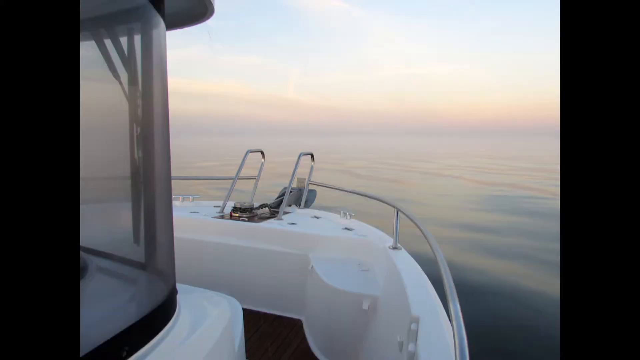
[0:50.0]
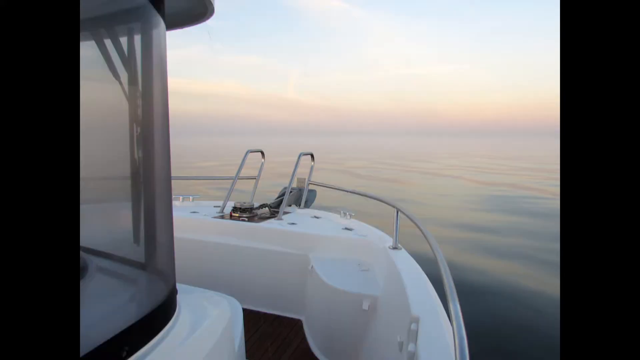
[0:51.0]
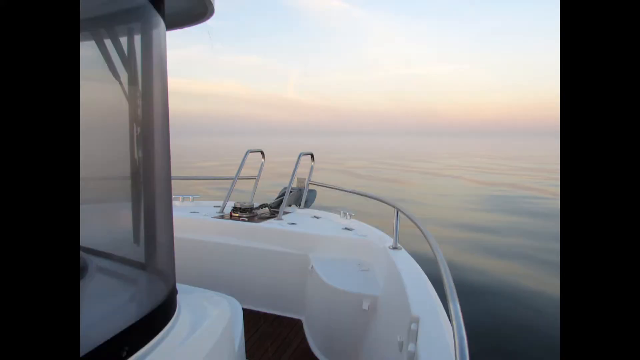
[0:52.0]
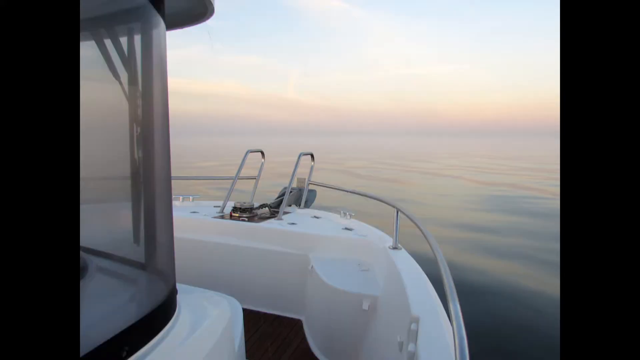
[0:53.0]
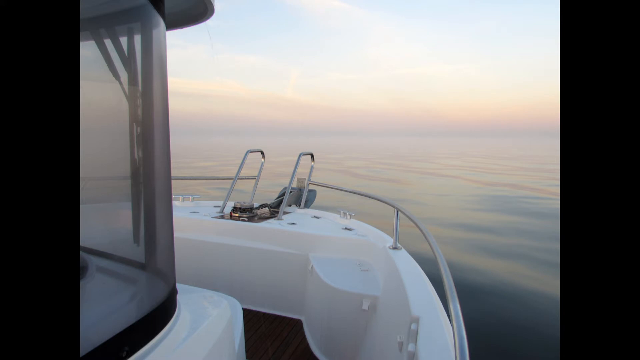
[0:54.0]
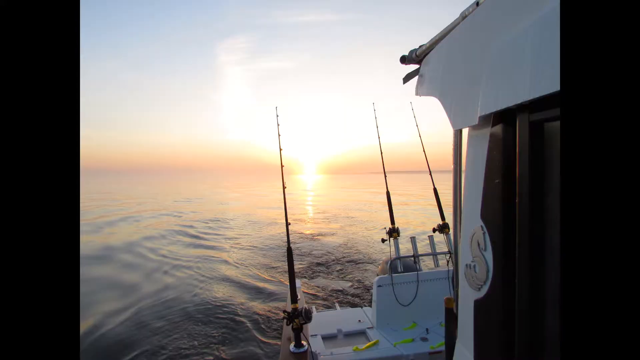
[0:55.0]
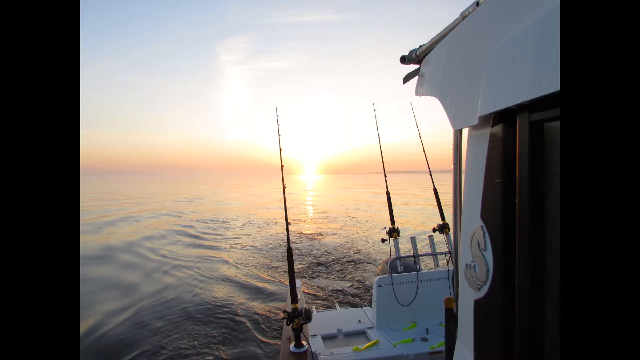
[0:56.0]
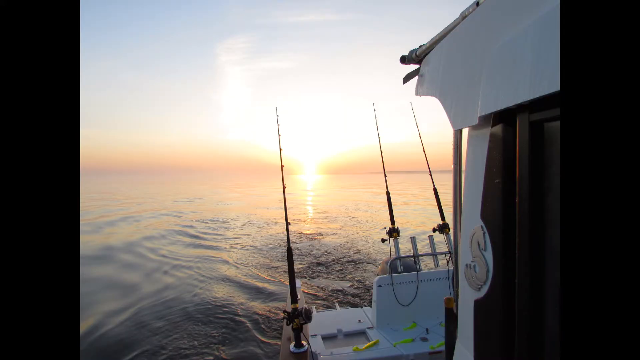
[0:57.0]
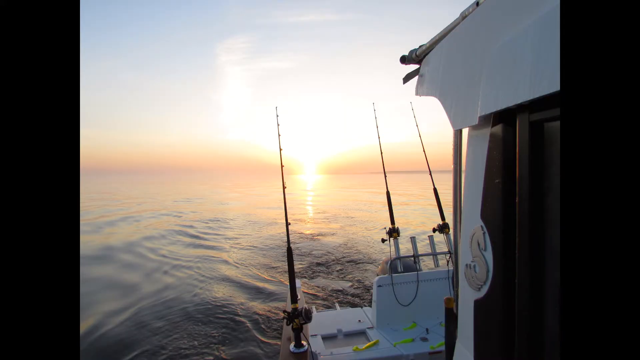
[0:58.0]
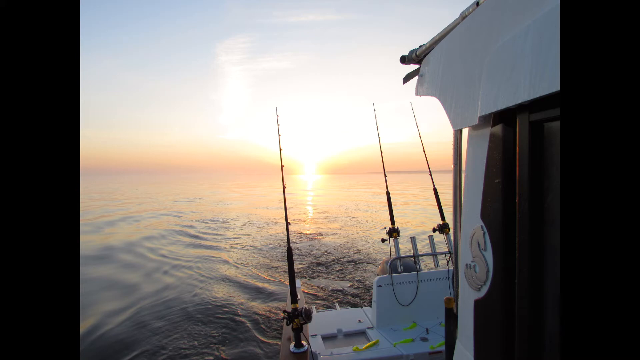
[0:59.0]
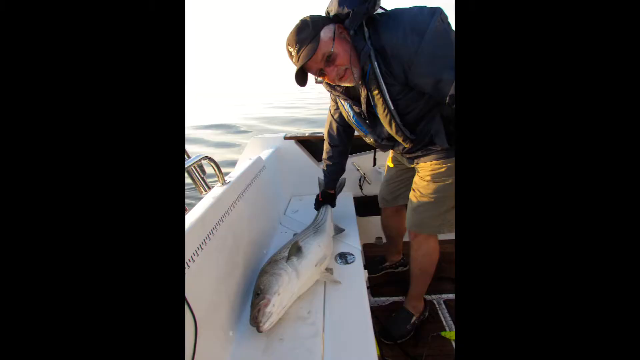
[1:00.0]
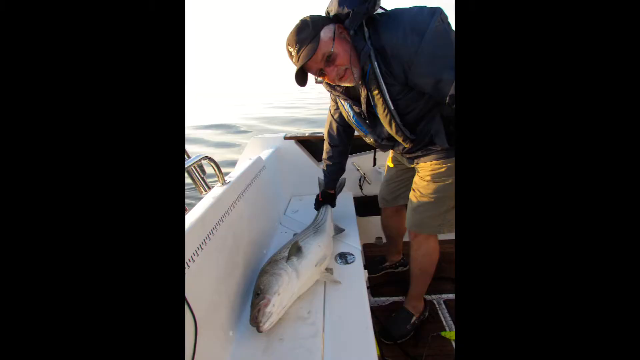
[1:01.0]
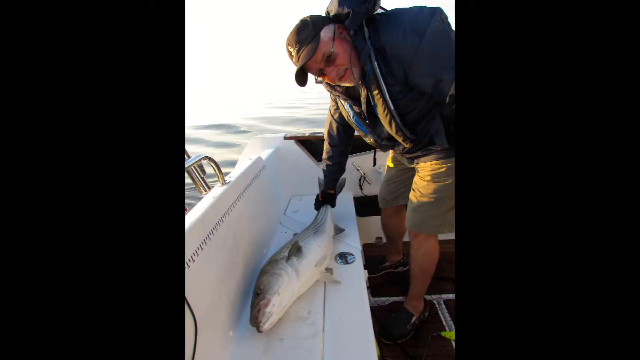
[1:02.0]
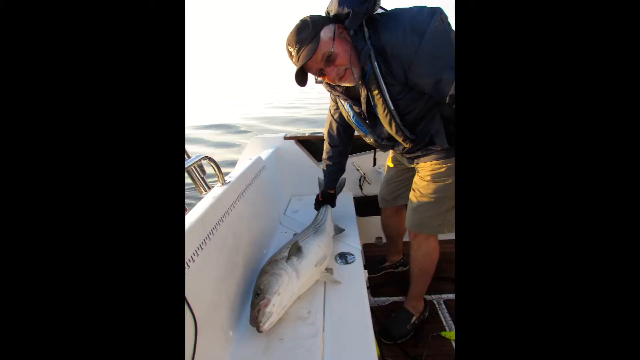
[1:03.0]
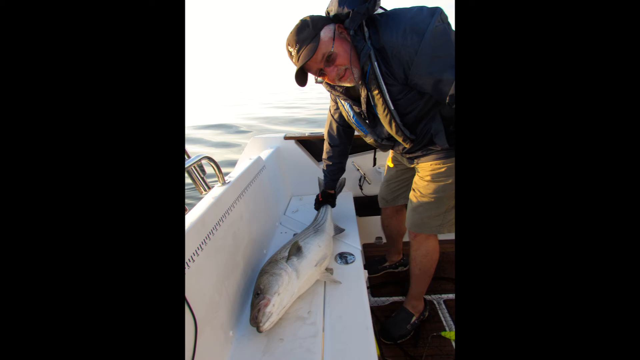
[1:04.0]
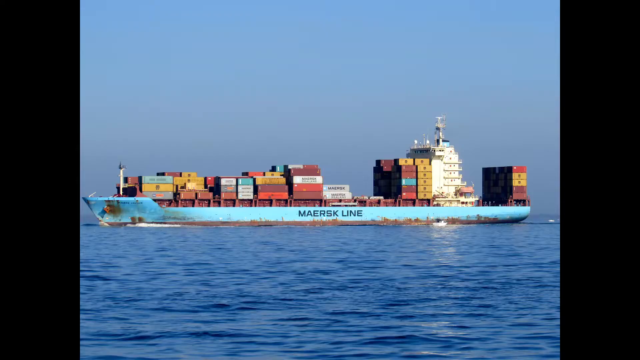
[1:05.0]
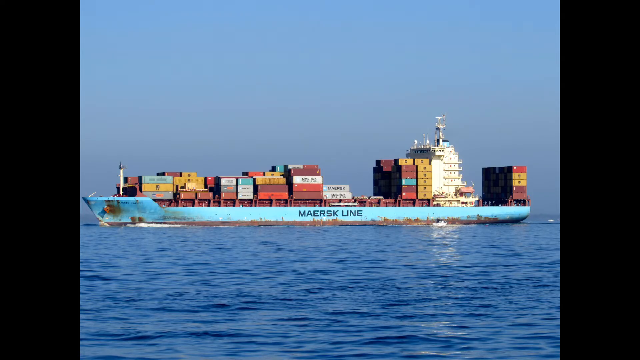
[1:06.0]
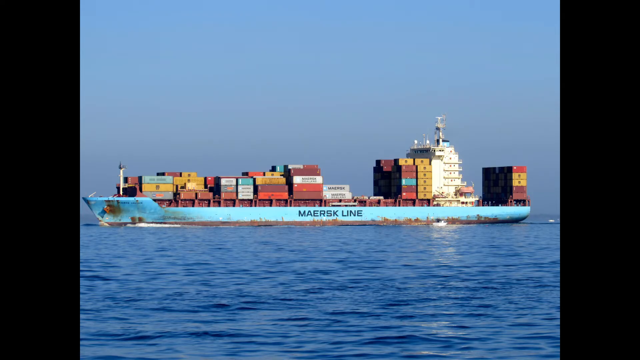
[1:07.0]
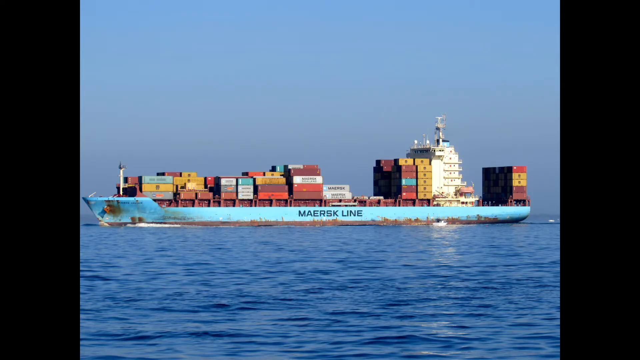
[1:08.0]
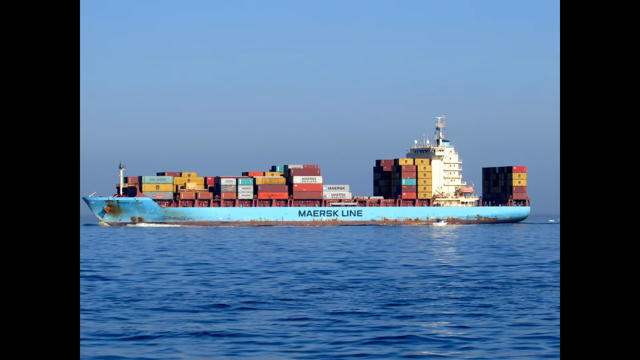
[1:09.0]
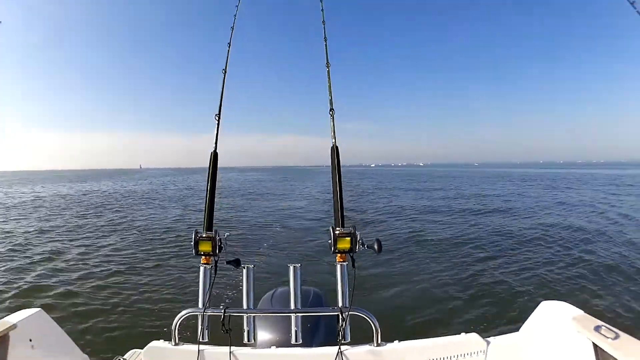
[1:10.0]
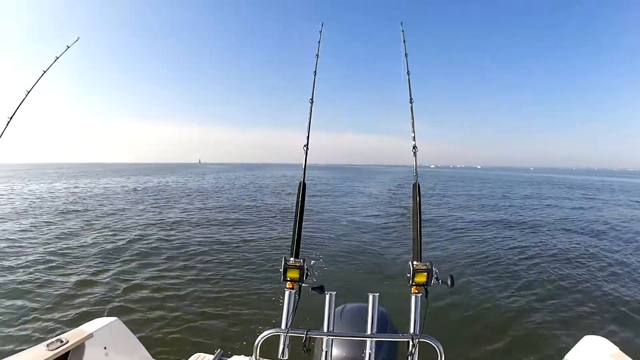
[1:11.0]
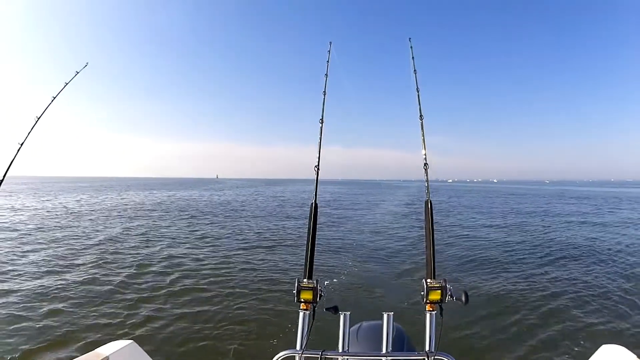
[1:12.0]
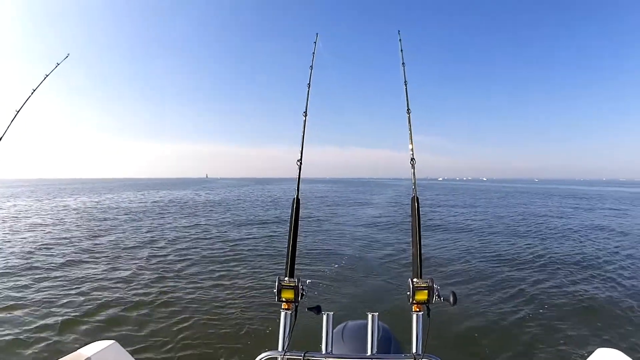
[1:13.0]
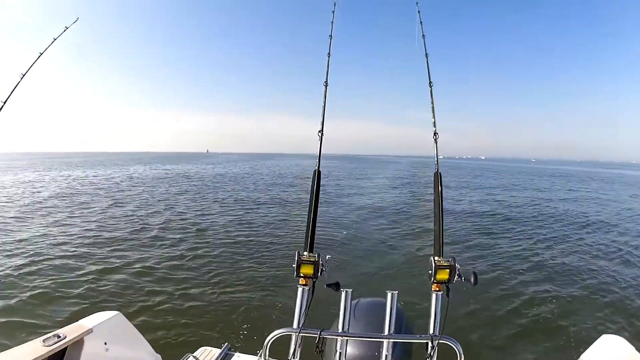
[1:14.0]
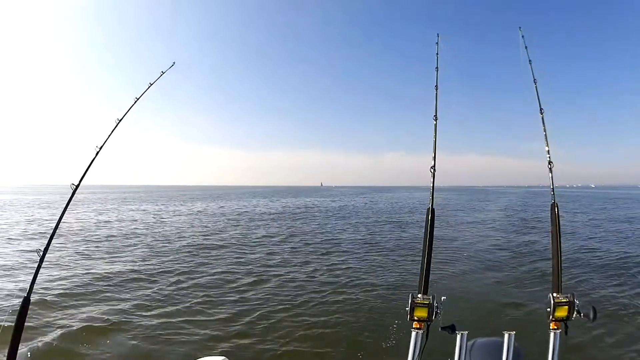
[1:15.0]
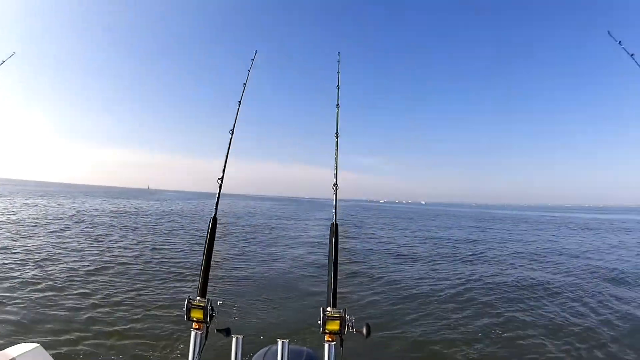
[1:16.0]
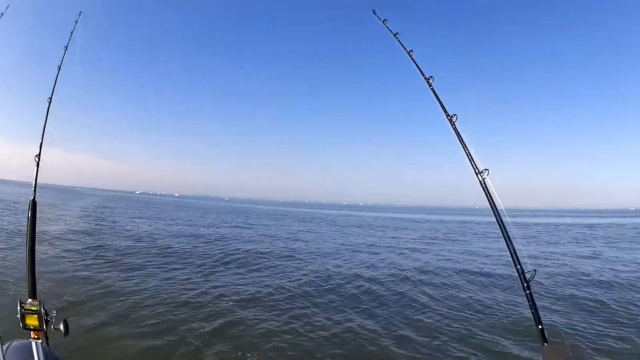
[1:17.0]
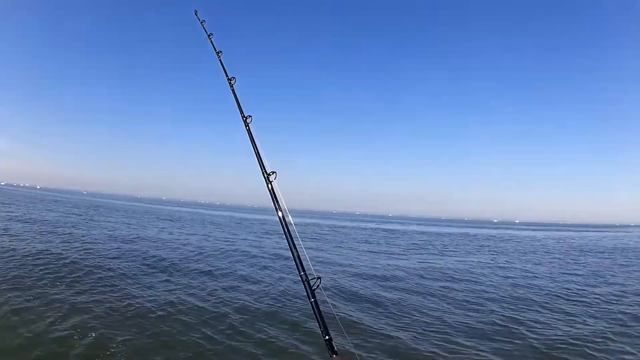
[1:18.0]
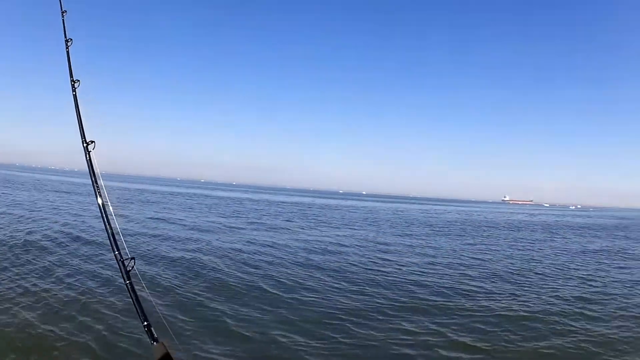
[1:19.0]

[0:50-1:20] A still picture shows what looks like the outside back part of the boat. The person taking the picture seems to be standing near a wall, since there is a black bar on the right and a black area on the left. The view changes to another shot of the view behind the boat, where three fishing rods appear to be in the water, with sunlight in the background. The shot stays on this for a while. Then a man in a hat and glasses is shown with a fish. Next is a shot of a cargo ship out on the ocean carrying multiple cargo. Finally, a video shows the boat going through the water with multiple fishing rods set up to catch fish.